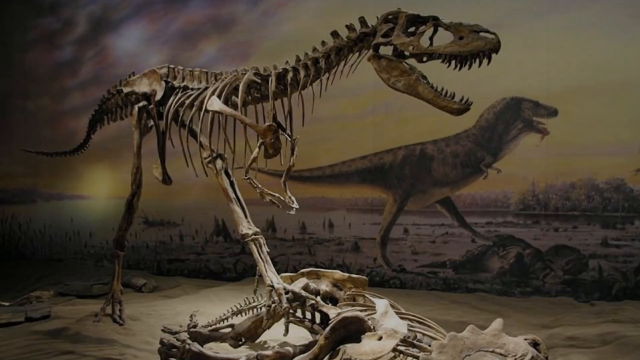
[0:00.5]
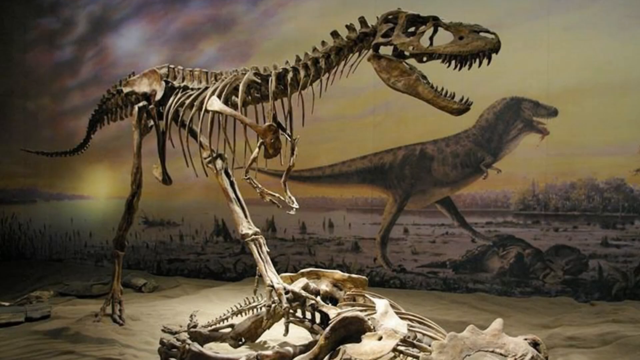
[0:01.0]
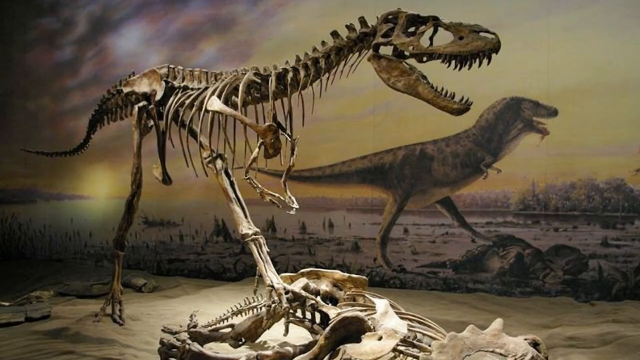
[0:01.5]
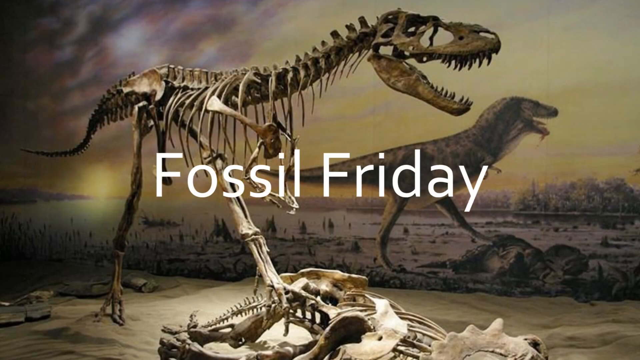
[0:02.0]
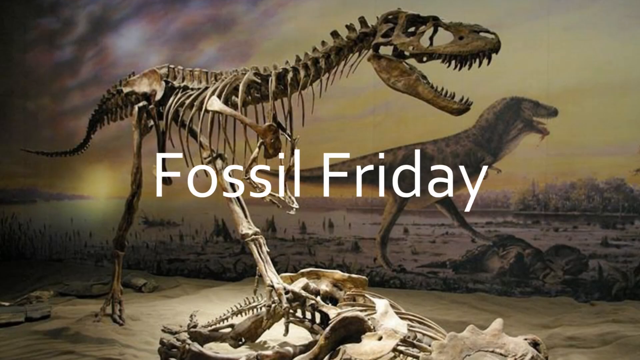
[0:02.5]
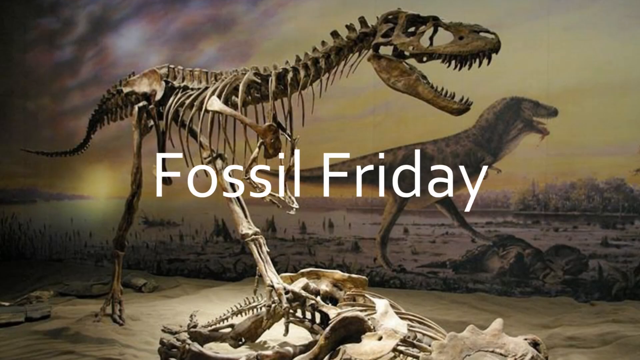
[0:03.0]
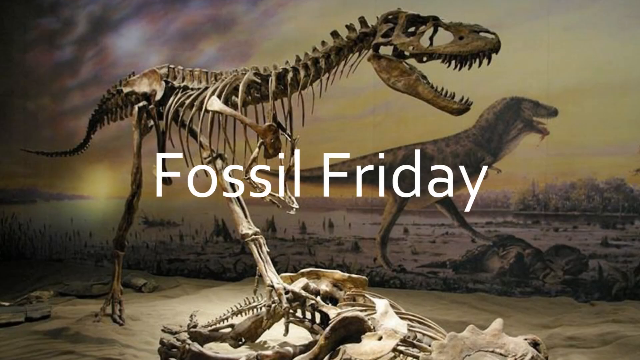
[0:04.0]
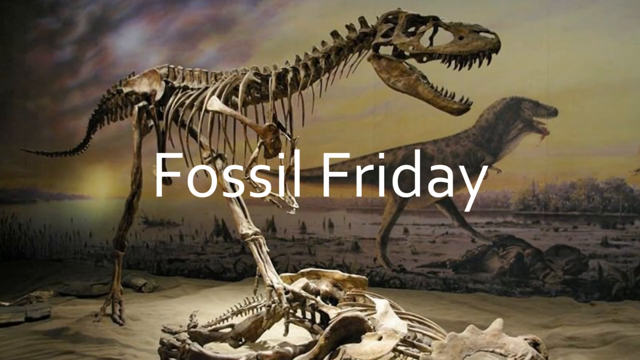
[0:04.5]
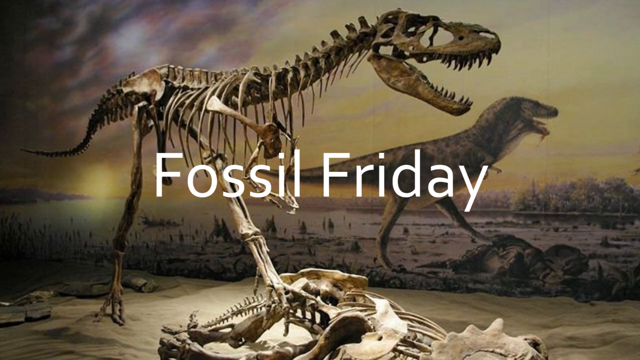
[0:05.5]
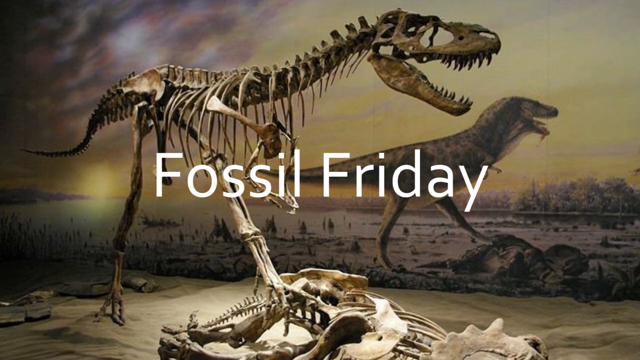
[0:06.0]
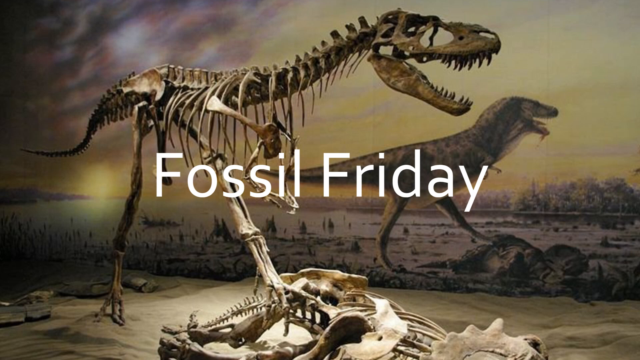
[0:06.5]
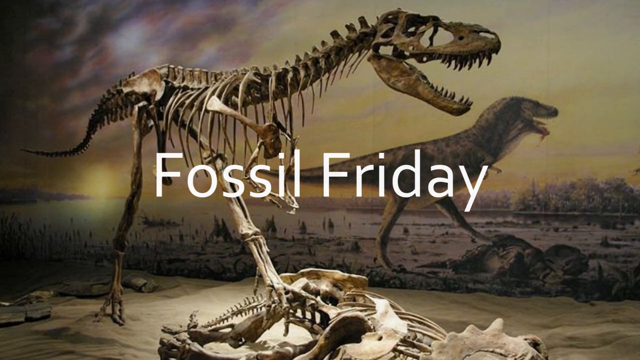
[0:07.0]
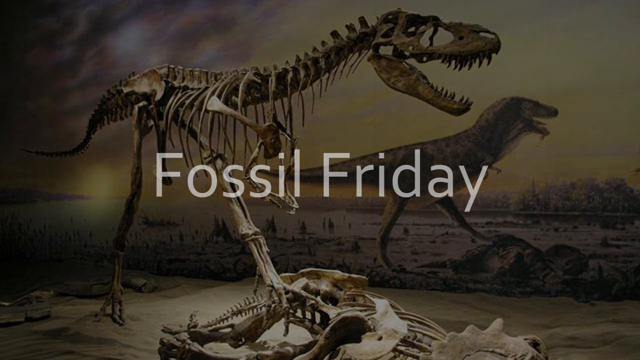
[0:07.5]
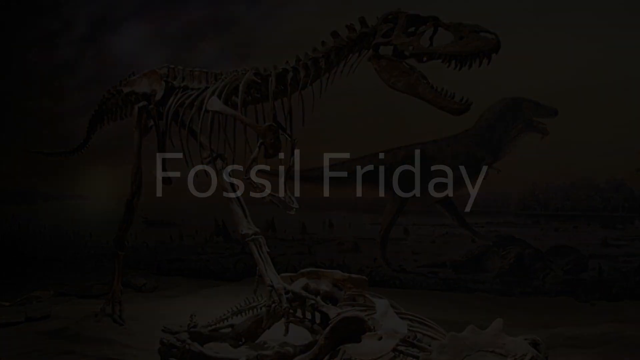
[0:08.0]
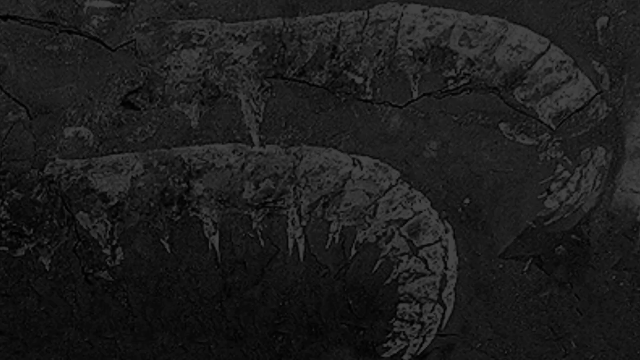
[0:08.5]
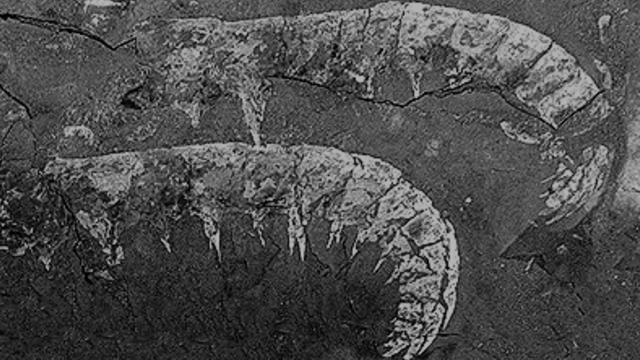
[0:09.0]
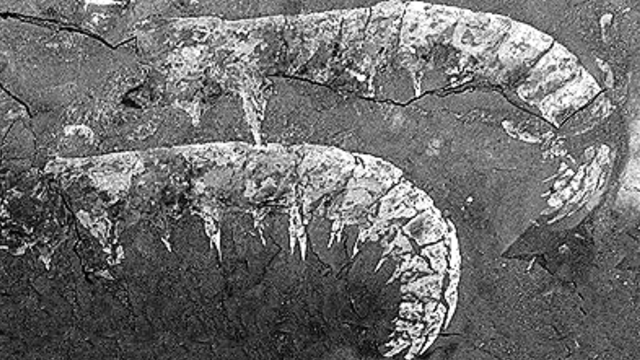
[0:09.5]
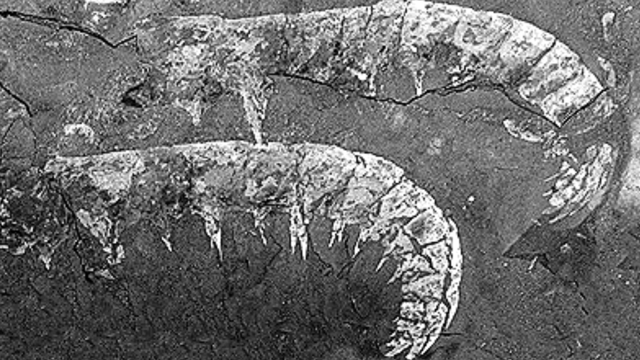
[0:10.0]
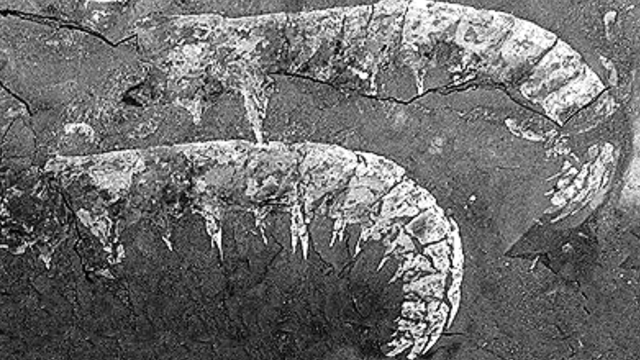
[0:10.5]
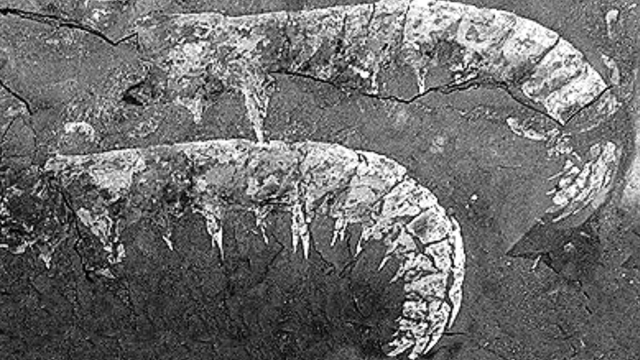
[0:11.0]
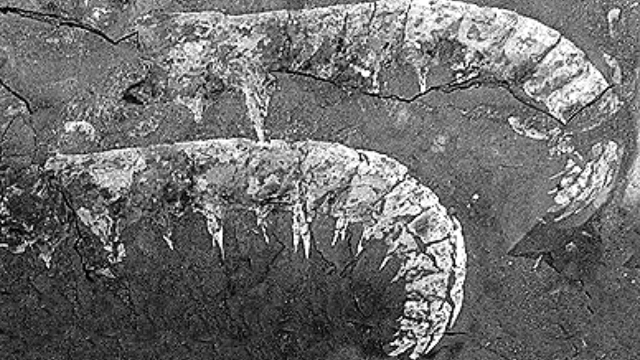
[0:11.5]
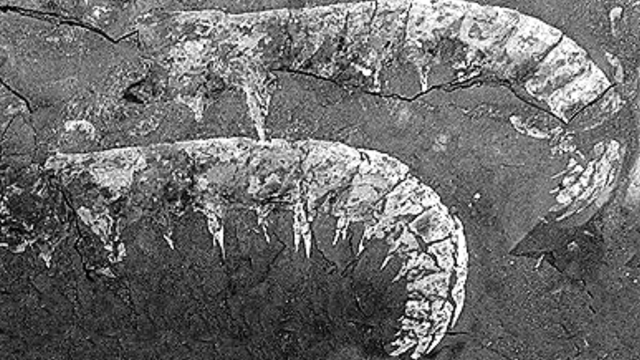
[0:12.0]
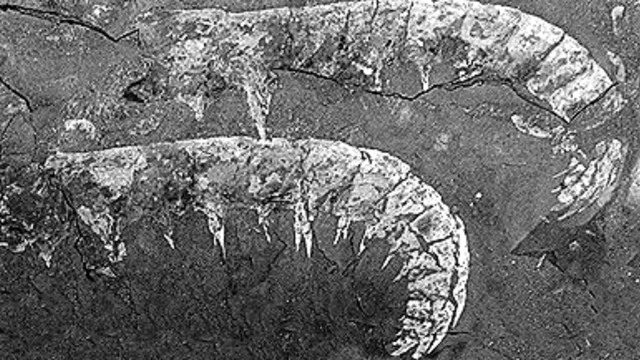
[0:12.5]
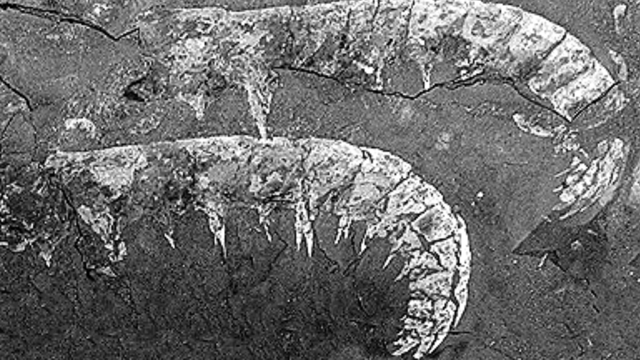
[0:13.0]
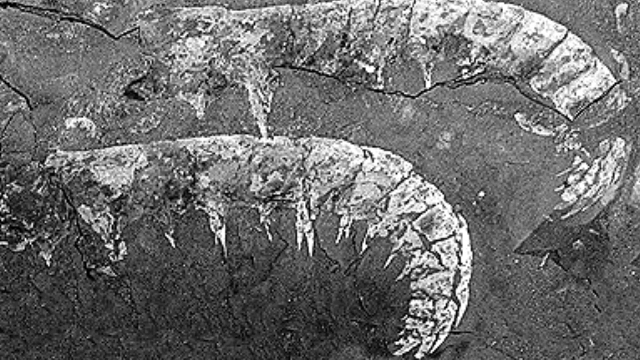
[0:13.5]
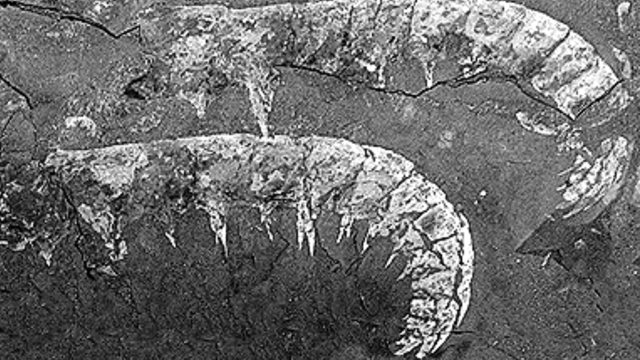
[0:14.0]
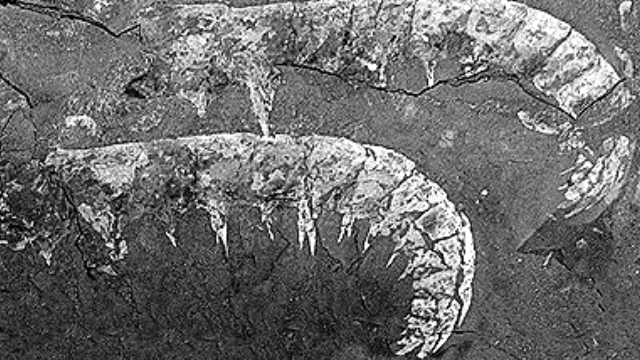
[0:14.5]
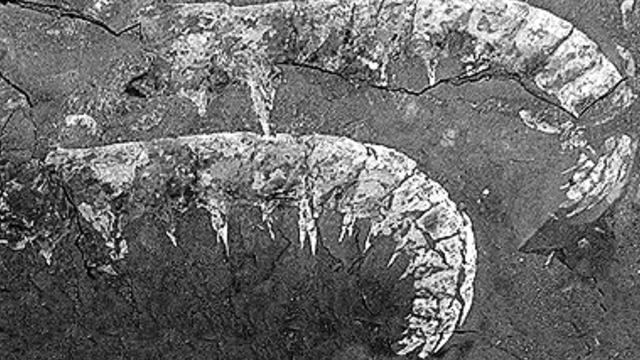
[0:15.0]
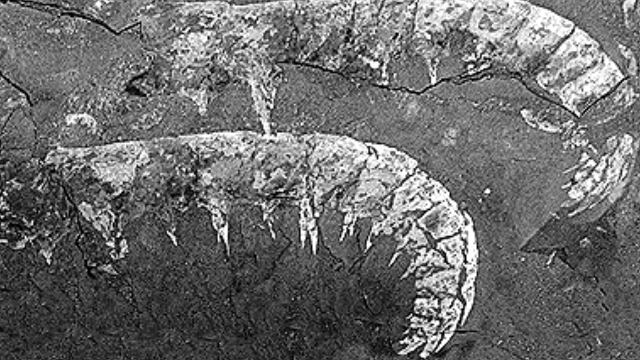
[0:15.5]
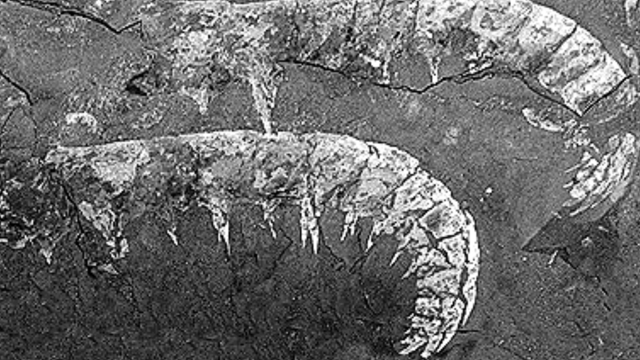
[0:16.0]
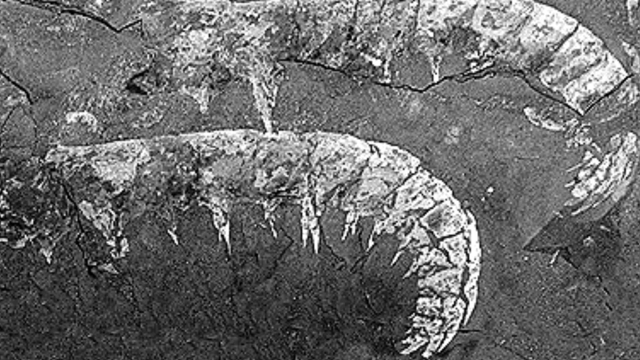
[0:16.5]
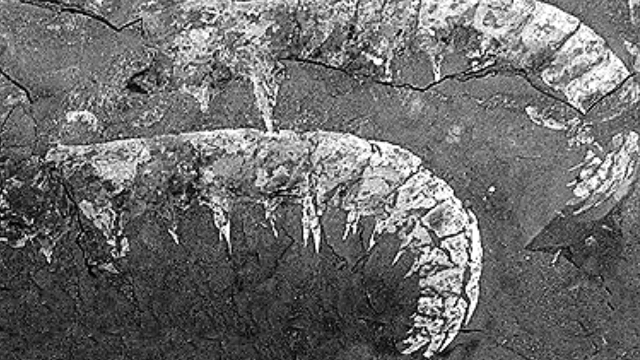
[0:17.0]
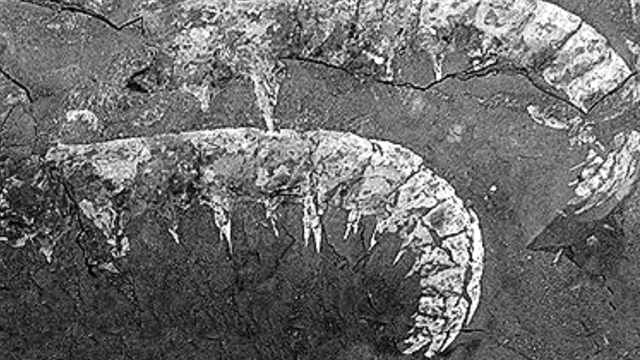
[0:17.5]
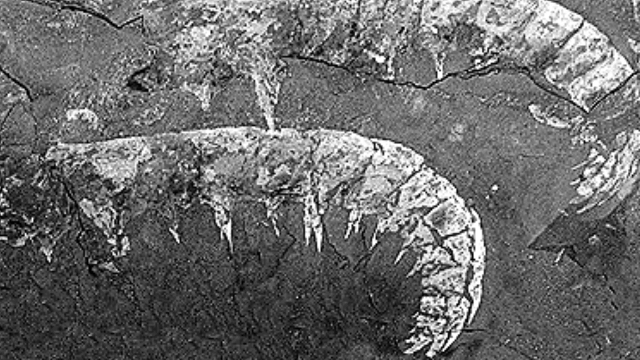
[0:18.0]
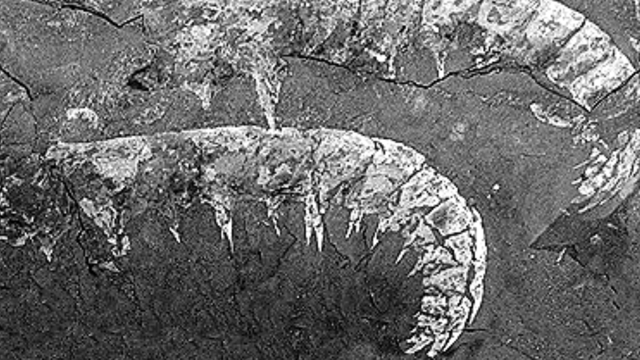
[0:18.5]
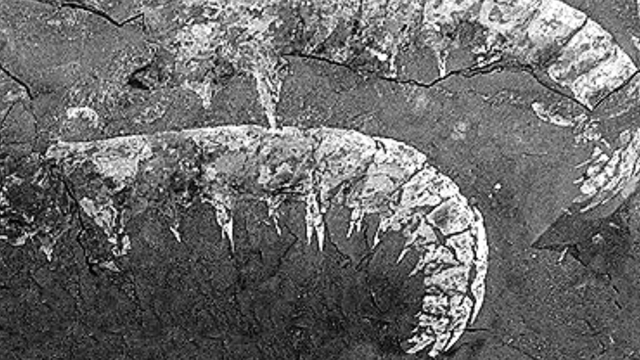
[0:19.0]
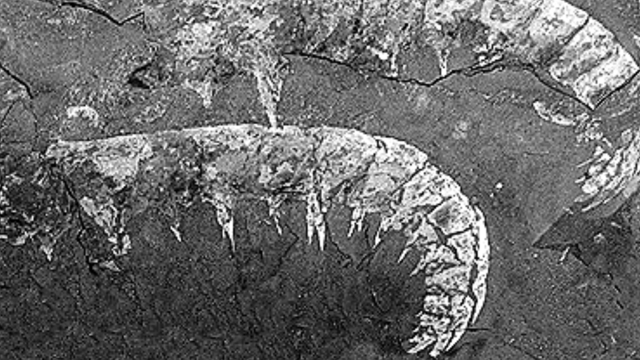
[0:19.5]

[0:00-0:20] A dinosaur fossil skeleton is in the foreground, facing the right side of the frame. Its mouth looks open, as if it is about to take a bite of something. Its left leg is positioned forward and its right leg is in a neutral position. The forward leg looks like it is stepping on another dinosaur fossil, visible only as a skeleton lying on the ground; the toes of the left foot are spread out and firmly planted on it. The dinosaurs look like they are standing on a dry dirt area. In the background is another dinosaur that appears to be living. It is also walking toward the right side of the screen and has short arms, long legs, a long outstretched tail, and an open mouth, as if it is about to take a bite of something. Its left leg looks like it is taking a step forward while its right leg is in a neutral position. This dinosaur also appears to be stepping on another dinosaur, which looks like it may be hurt or deceased but has not yet turned into a skeleton. The words "Fossil Friday" appear on the screen in white. The background looks like a dark, dreary atmosphere, with lots of storm clouds entering from the upper left. Next, two fossils appear, one above the other. They look like they are embedded in rock and sort of look like fossils of centipedes.